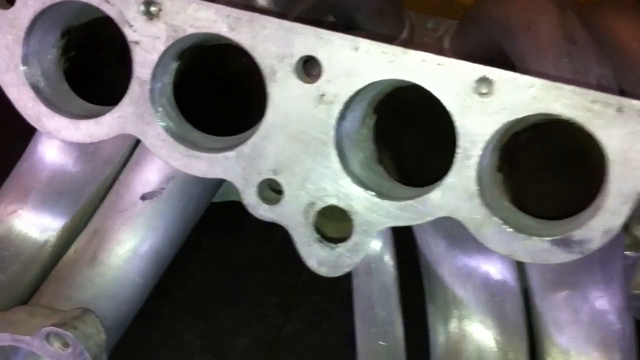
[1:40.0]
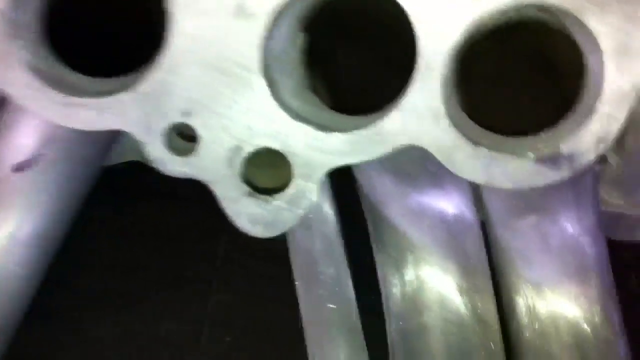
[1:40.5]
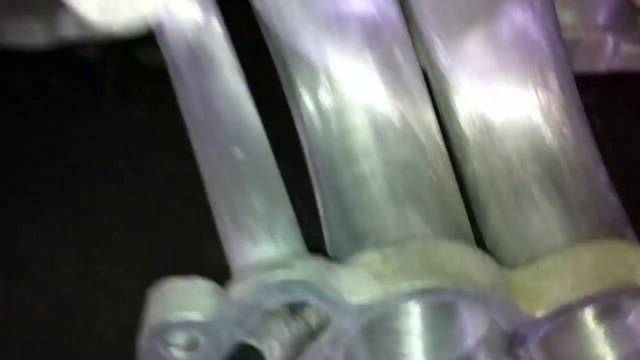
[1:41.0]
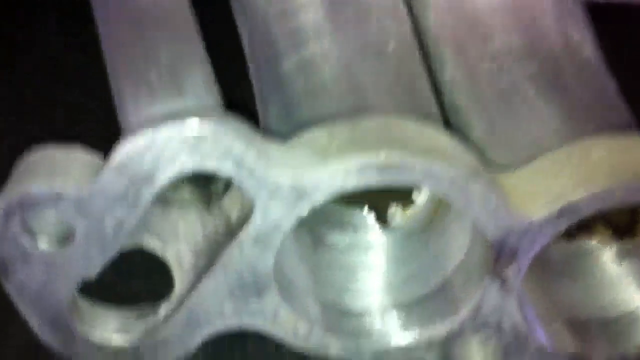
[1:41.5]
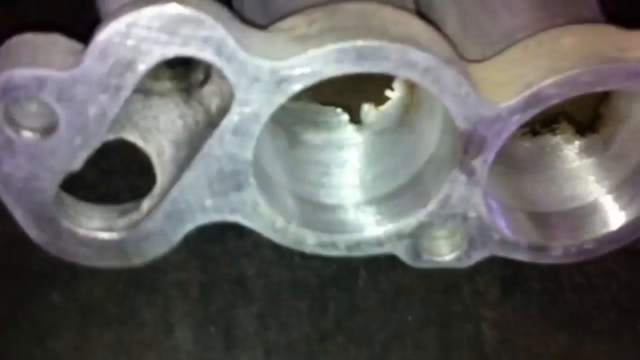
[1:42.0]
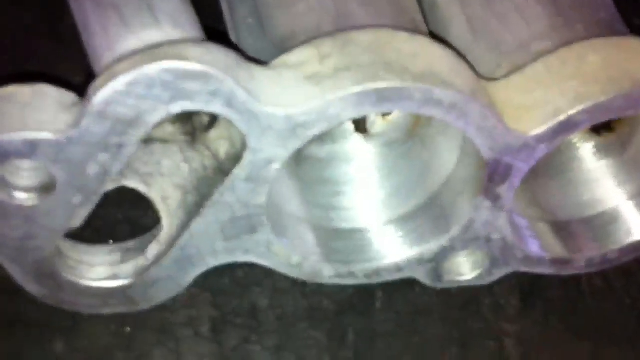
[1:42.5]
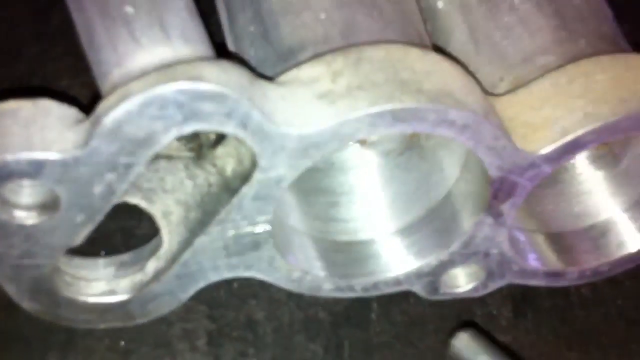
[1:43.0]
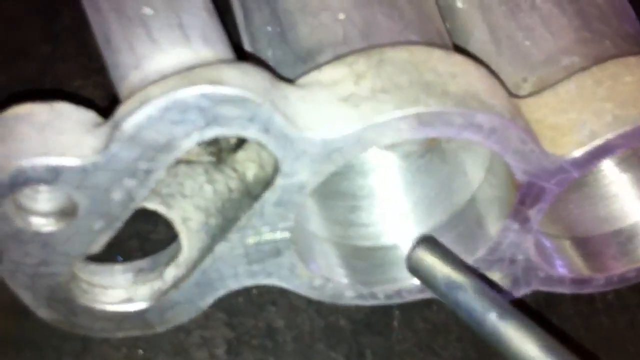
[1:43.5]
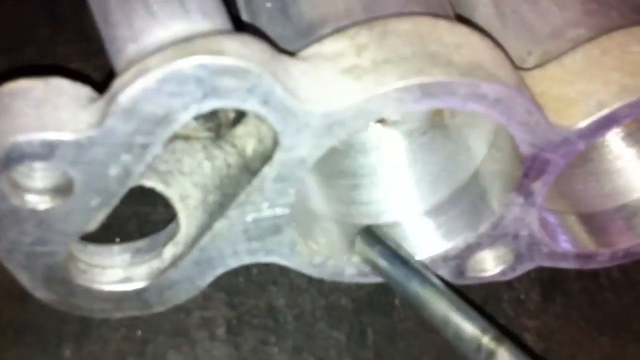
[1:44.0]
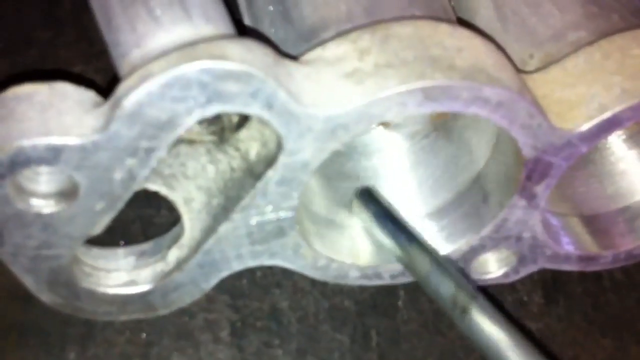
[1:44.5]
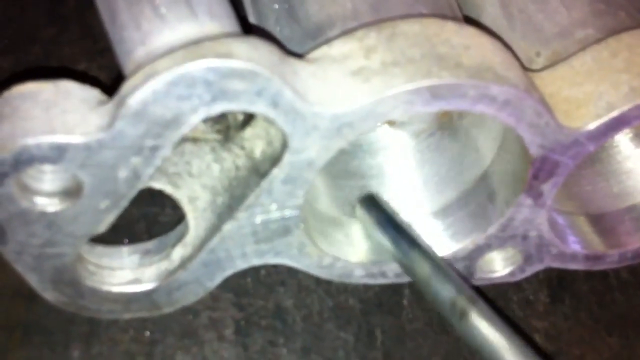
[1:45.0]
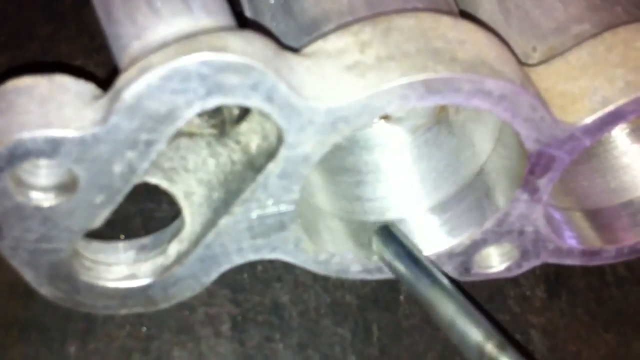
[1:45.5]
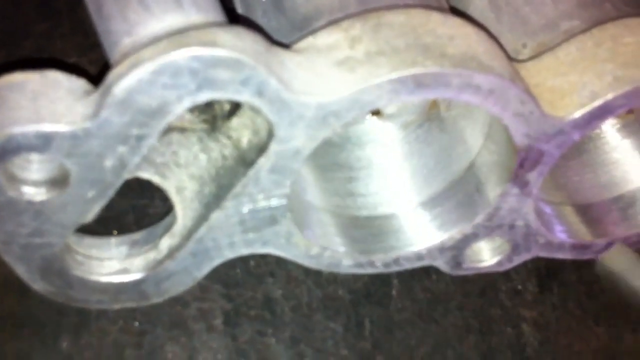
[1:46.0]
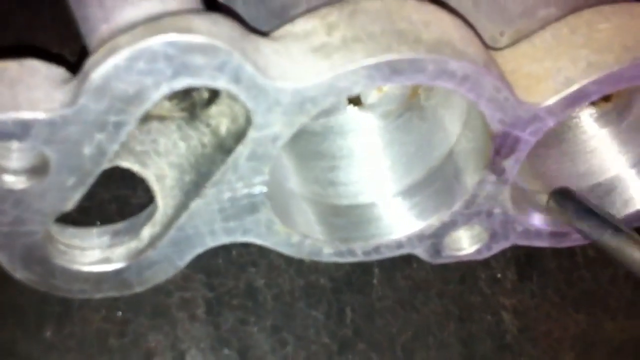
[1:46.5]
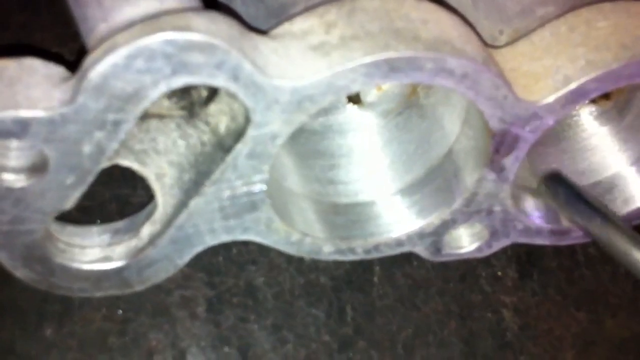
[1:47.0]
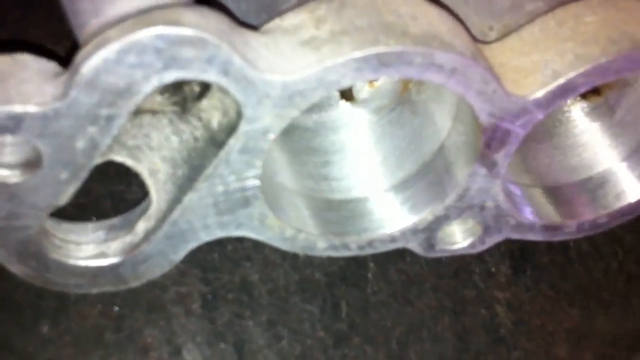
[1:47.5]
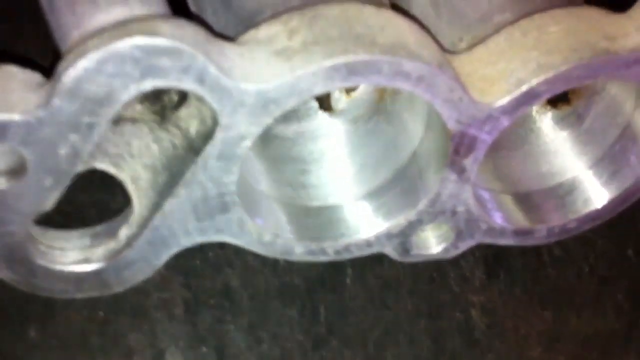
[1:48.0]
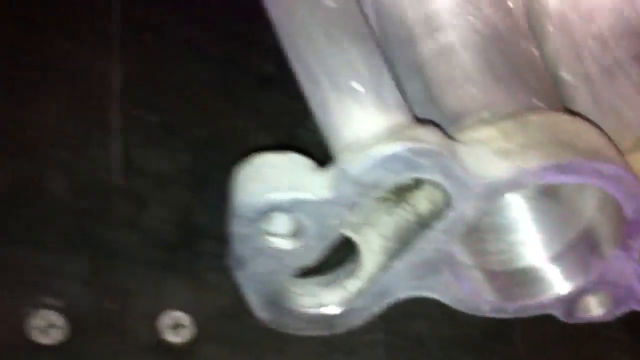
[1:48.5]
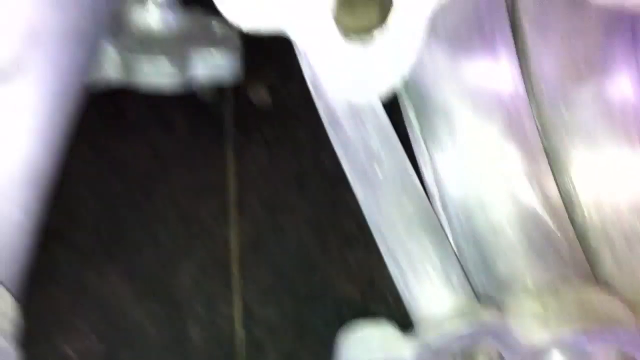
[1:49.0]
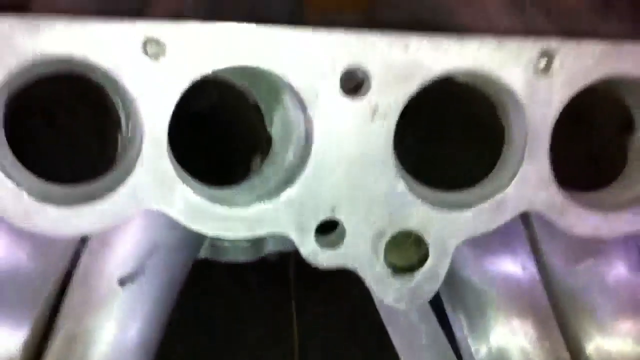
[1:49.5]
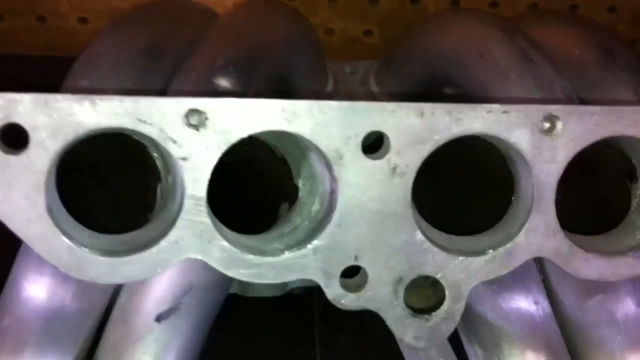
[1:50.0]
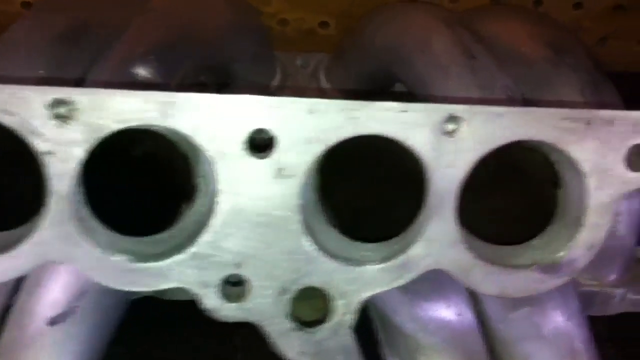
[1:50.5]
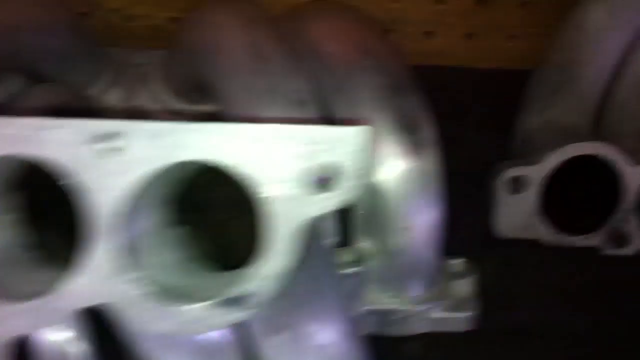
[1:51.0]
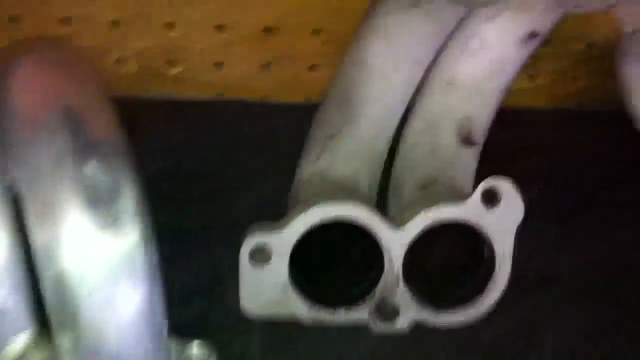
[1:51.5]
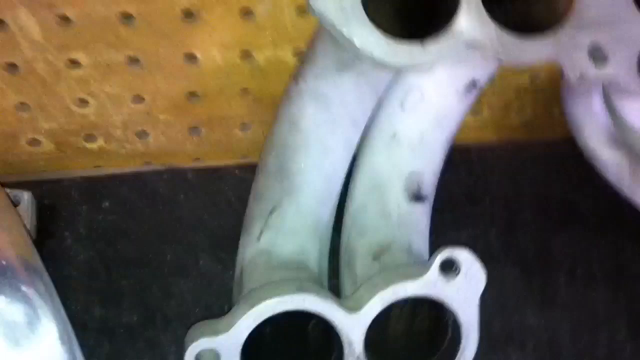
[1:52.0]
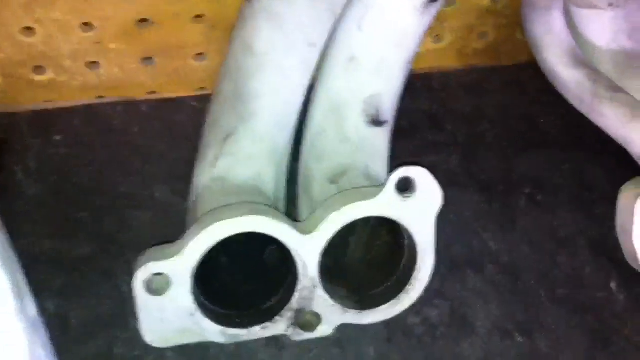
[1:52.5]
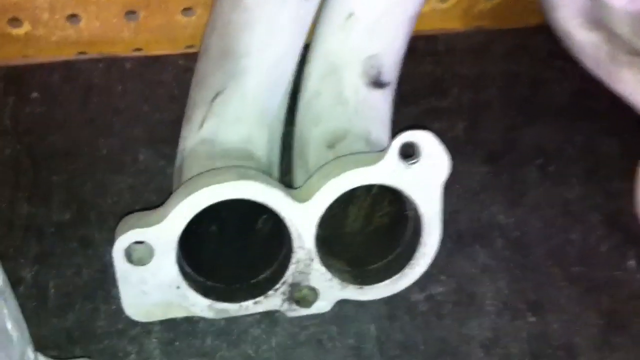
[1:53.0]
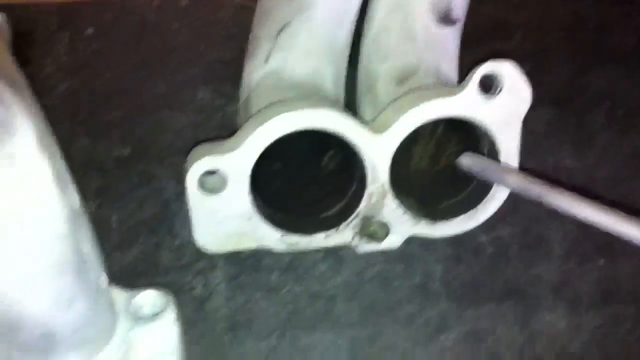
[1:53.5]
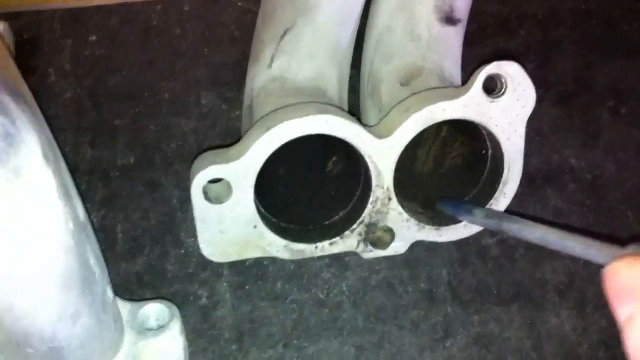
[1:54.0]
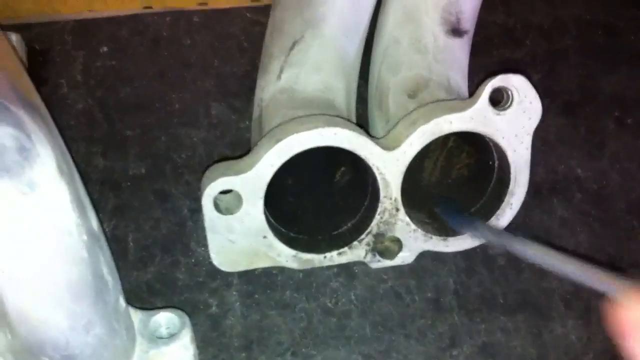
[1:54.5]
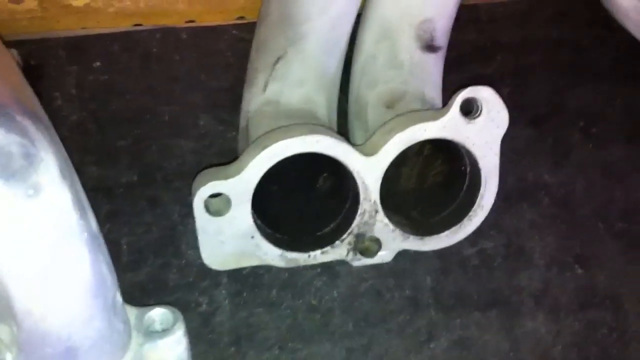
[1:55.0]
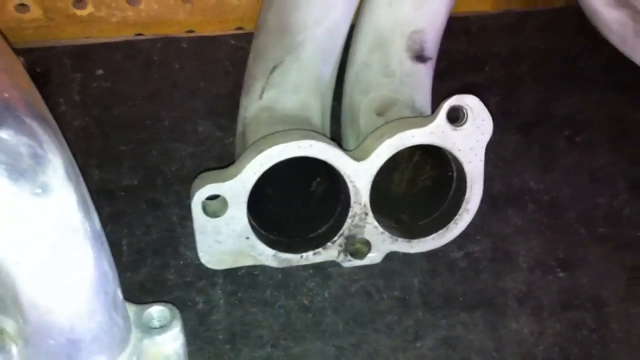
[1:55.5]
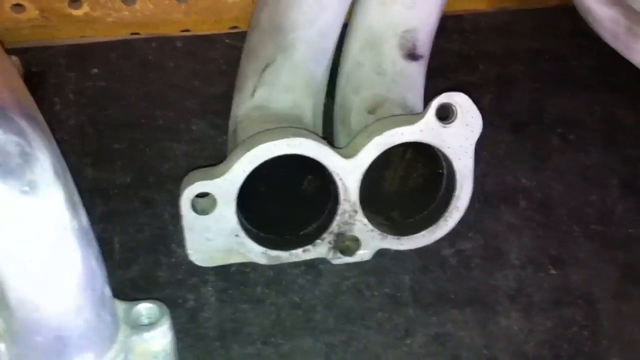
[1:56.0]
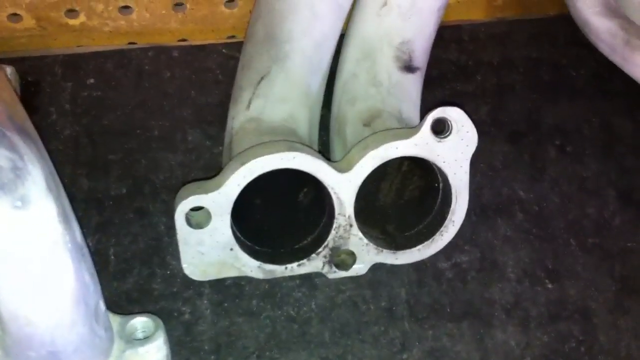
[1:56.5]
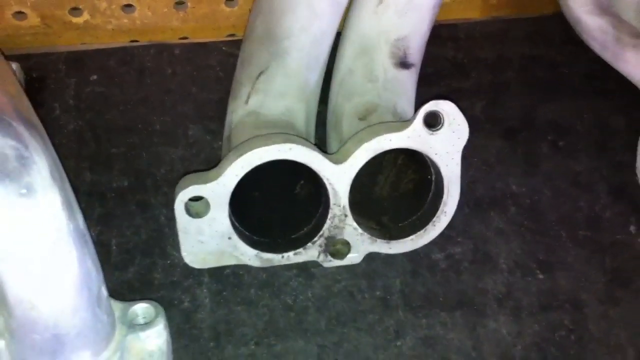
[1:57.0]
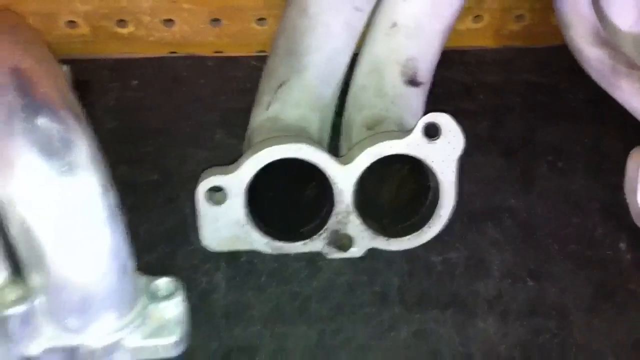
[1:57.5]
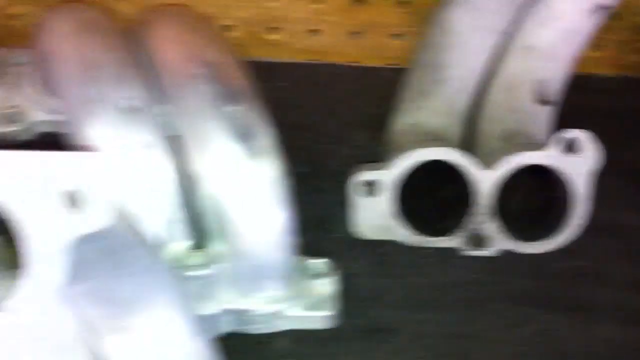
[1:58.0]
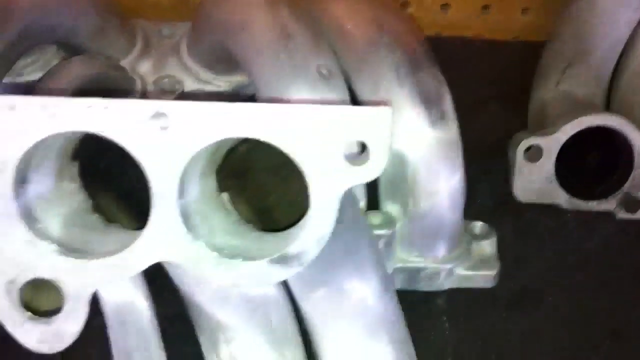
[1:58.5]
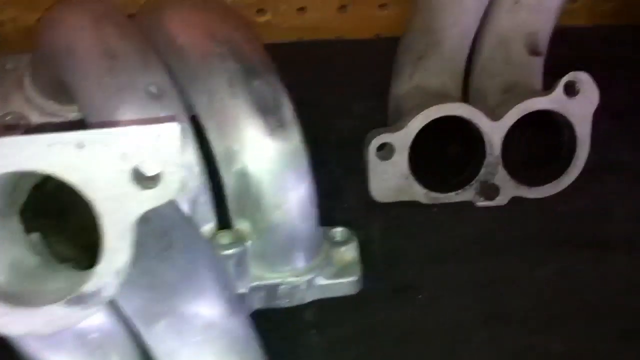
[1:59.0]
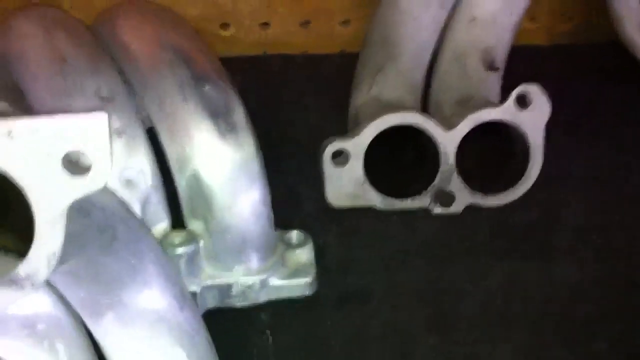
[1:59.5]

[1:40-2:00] The ends of pipes are shown, with a plate with holes connecting the pipes. Somebody runs a rod along the inside of the holes. The first ones are very shiny, looking like they were cleaned up or had a layer of metal put around them. Another set of pipes is checked; these look cleaner but not as new as the first ones. The third set looks very dark and dirty inside, and the pipe is dirty on the outside too, with smudges, not nearly as nice as the first set, where the metal wand is rubbed on the sides so the inside can be seen. The brown pegboard is still behind the pipes, and the pipes are laying on a dark surface.